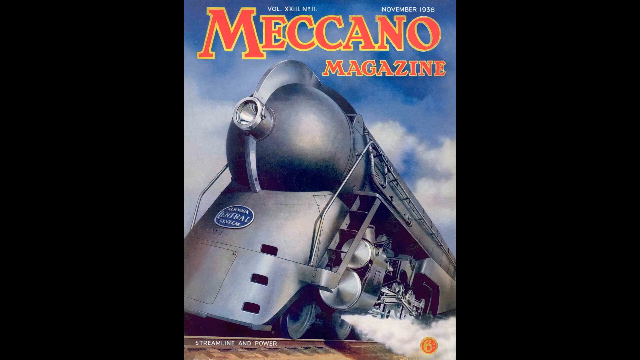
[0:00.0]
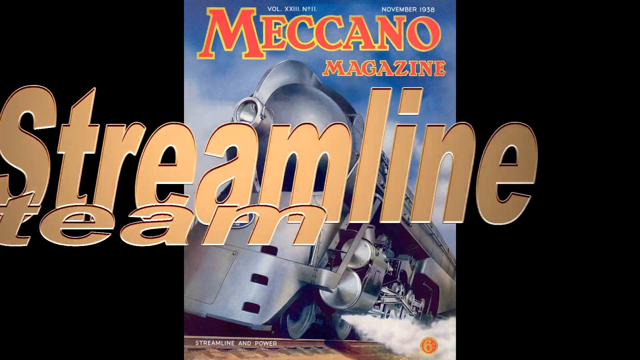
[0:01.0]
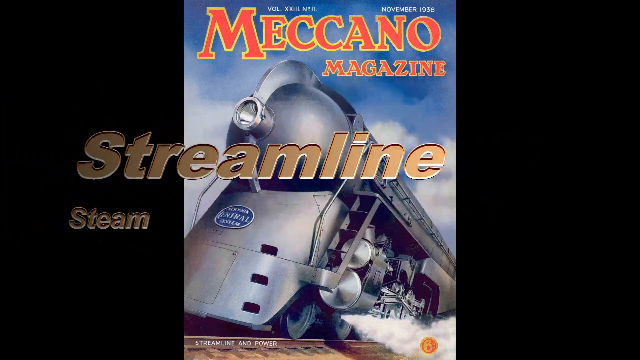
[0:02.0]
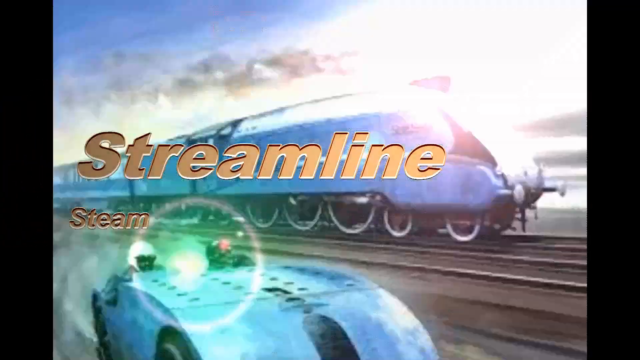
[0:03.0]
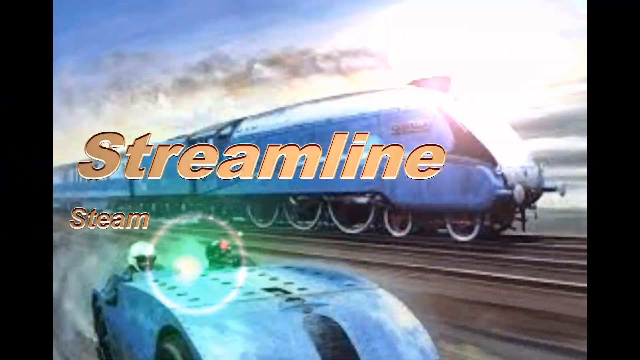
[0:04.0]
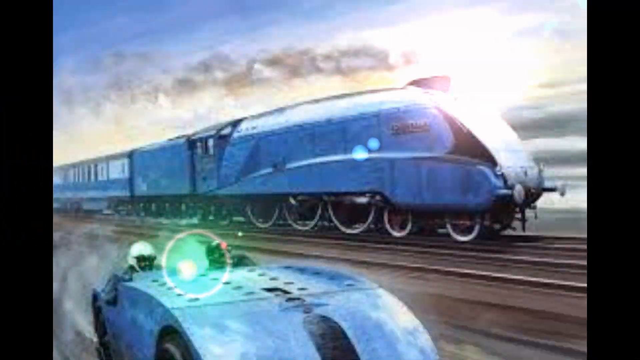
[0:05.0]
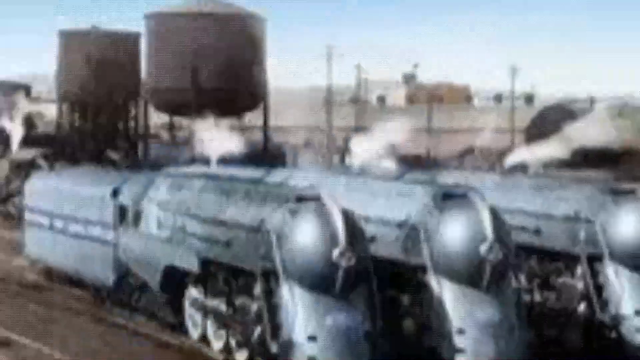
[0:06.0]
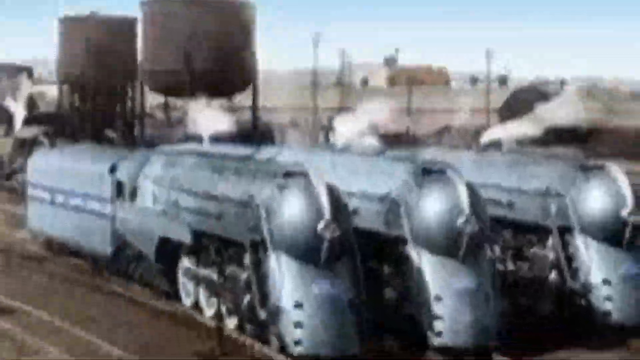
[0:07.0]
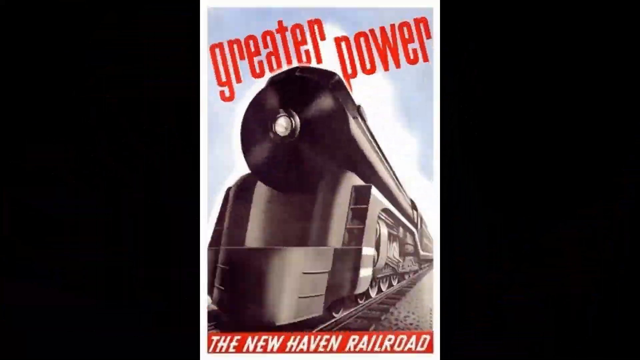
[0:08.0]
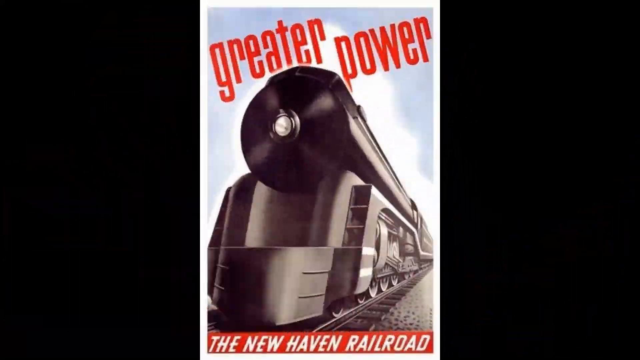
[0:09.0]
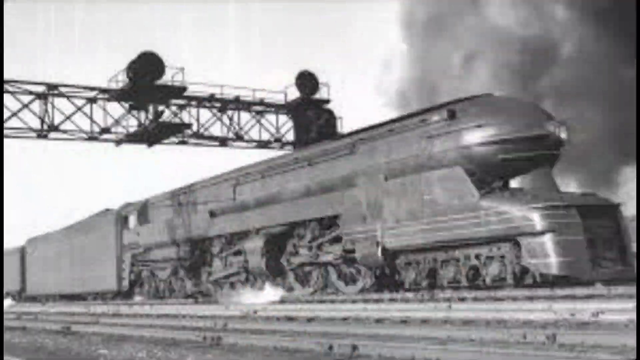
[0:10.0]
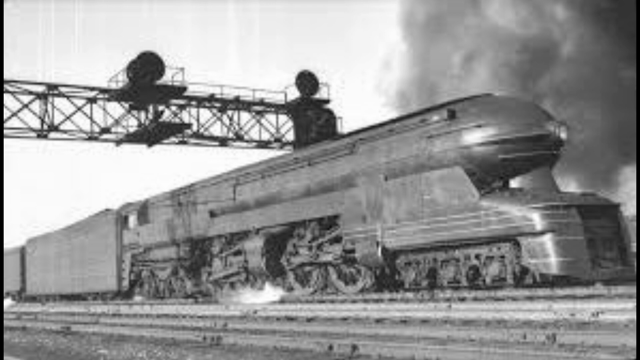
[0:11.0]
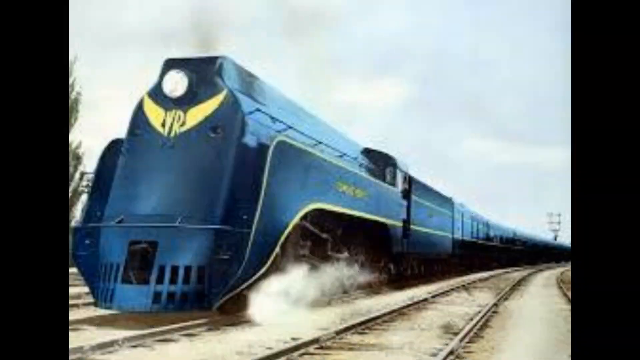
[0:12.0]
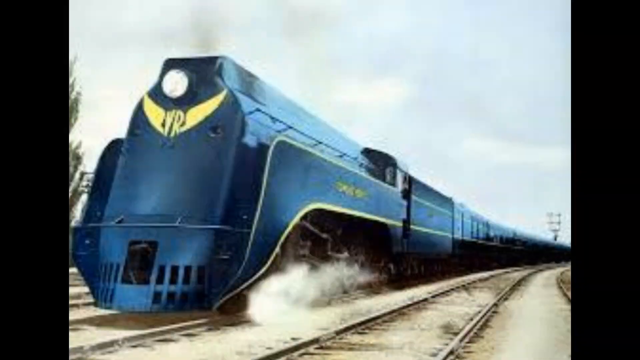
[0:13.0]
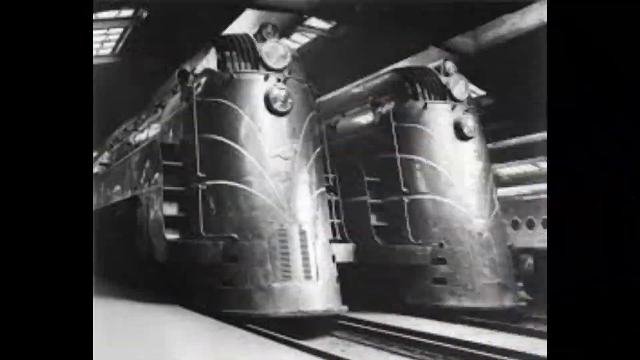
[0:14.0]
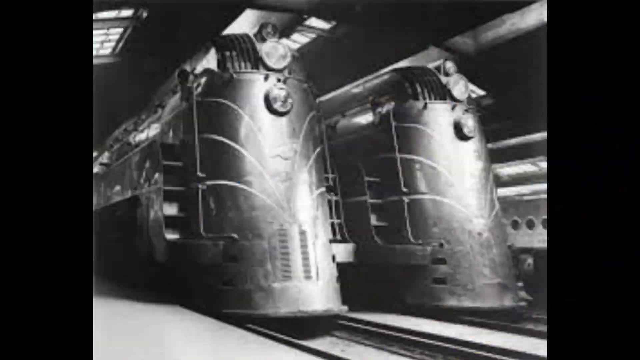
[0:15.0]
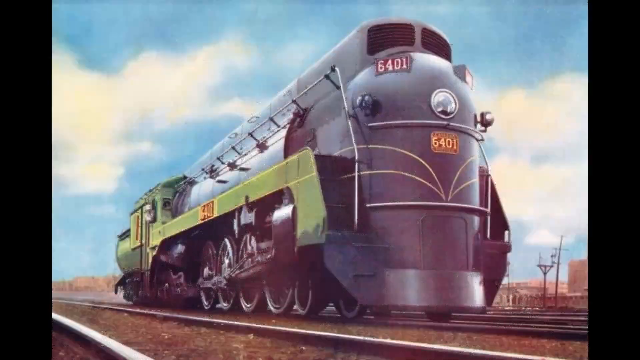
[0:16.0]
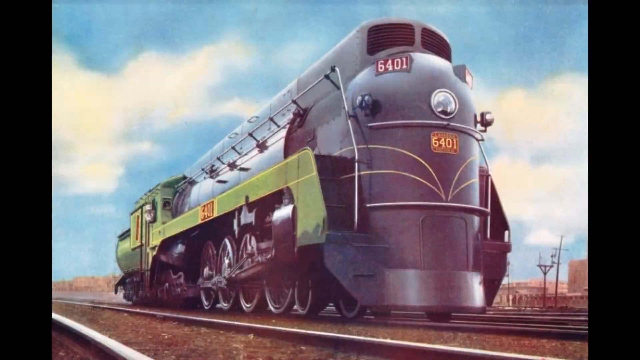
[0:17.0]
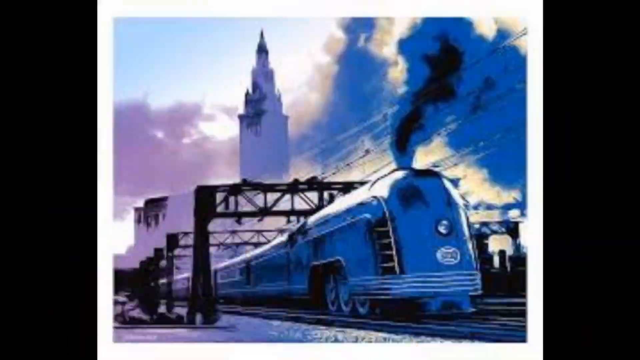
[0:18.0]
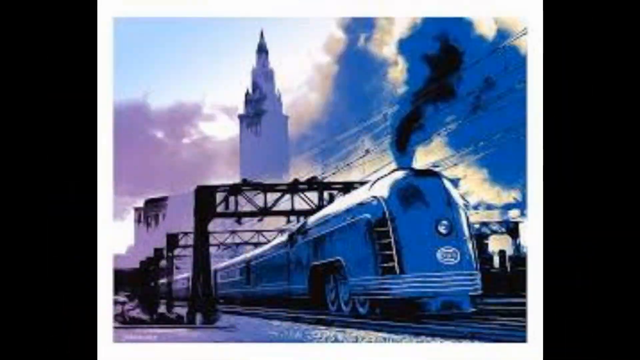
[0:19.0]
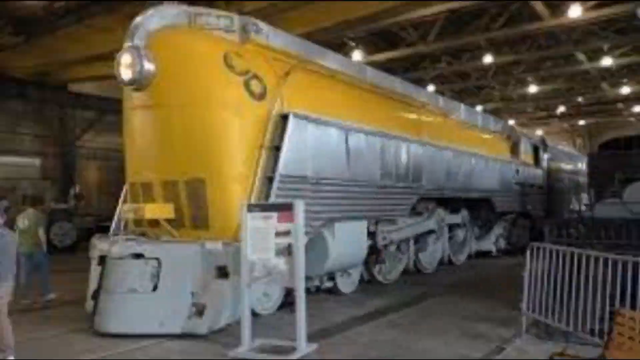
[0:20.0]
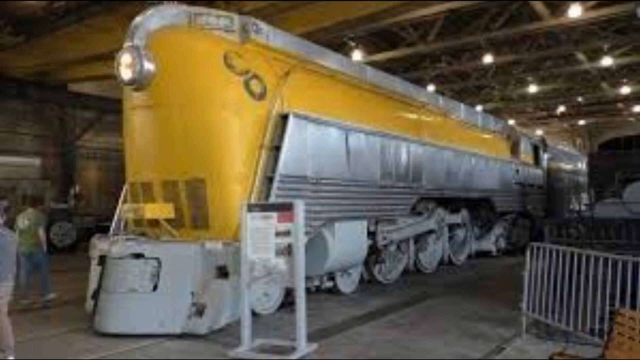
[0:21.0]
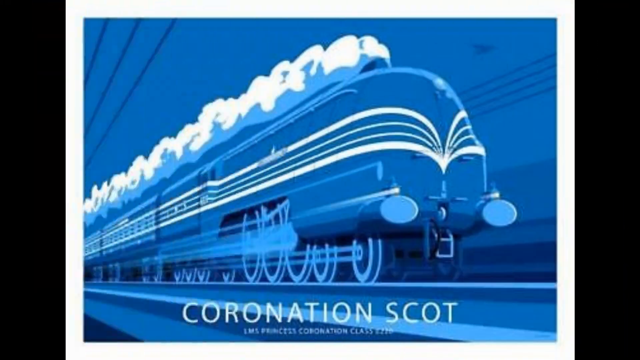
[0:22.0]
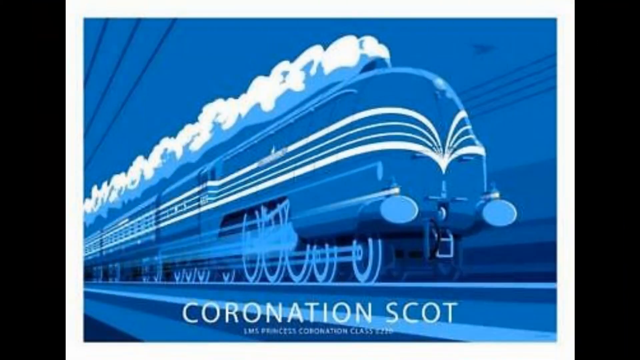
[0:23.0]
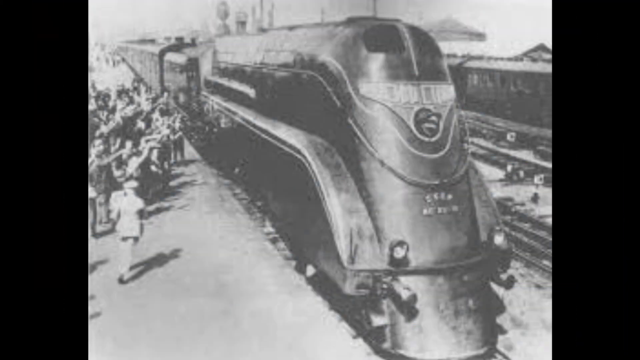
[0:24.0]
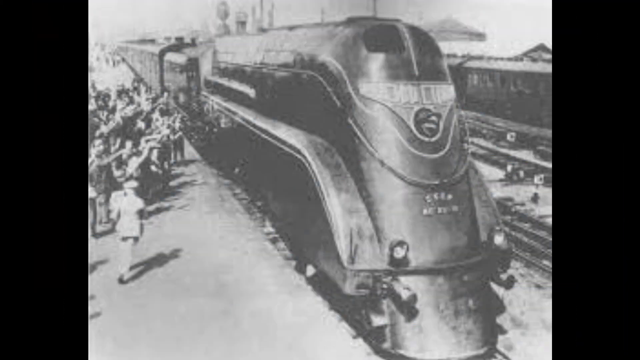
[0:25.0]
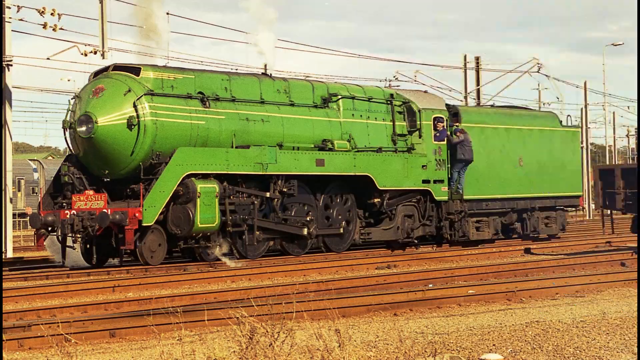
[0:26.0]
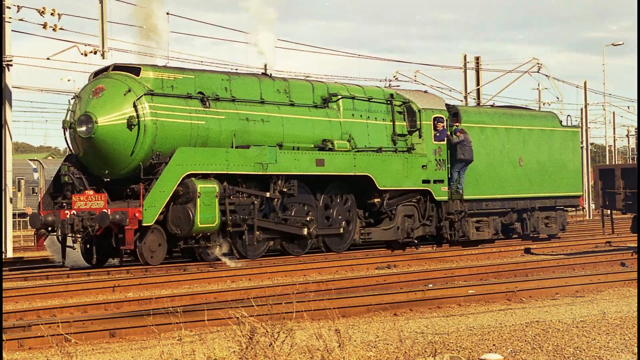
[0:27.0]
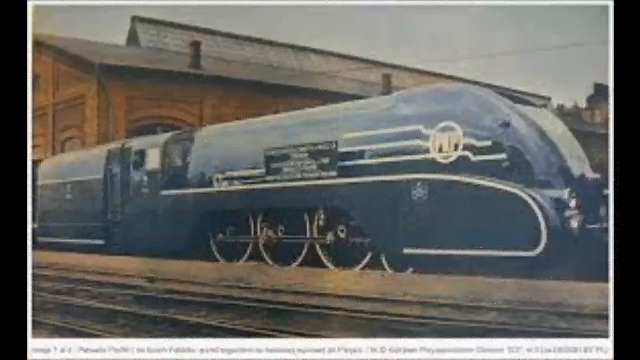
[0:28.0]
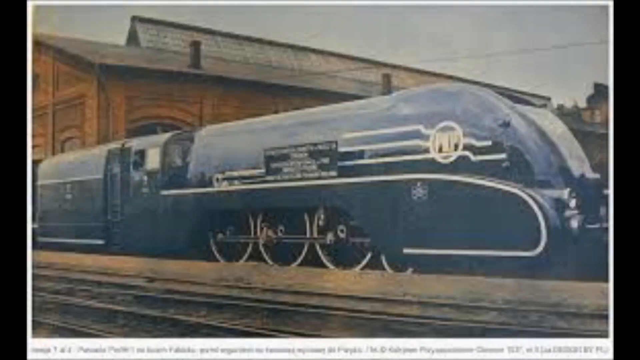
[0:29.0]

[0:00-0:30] The video opens with a still image of Meccano magazine featuring a painted image of a steam train moving from right to left and facing out of the magazine. The text "streamline steam" comes on screen. A cut leads to another painted image of a train that looks like a steam train, going from left to right and apparently moving very fast, though it is a still image. Next come three steam trains, then another painting that says "greater power", which looks somewhat like Russian art from the 1910s in style. A black and white photograph of a steam train follows, then another painting of a train; these look like steam trains but more modern, and this one is blue with a yellow symbol on the front that apparently says "VR". Two steam trains, possibly moving or possibly stationary, appear in a black and white frame, followed by a painted image of a black steam train with a yellow rim and the number 6401 on the front. Next is a blue steam train with steam coming off it, then a photograph of a yellow steam train. Another steam train appears in a painting with the text "Coronation Scott"; it is a very blue image, with a blue background and a blue train. A black and white image shows a stationary train with people greeting it, waving their hands. A colour image shows a green steam train with the driver visible and somebody hanging on the side of it. Then comes a blue steam train with distinctive large wheels, followed by a black and white image of a steam train.